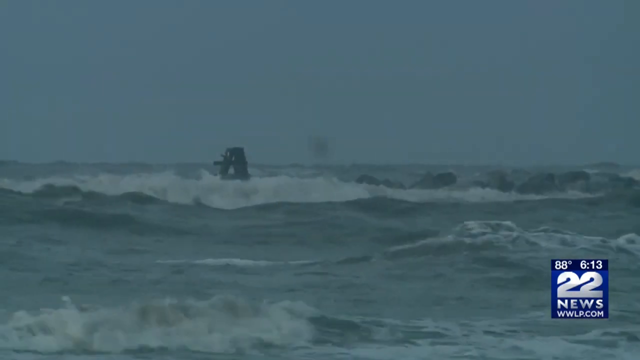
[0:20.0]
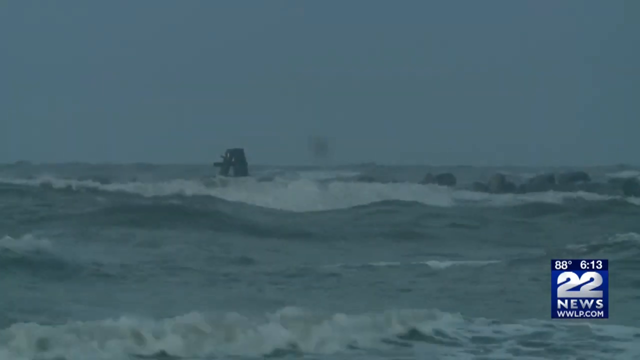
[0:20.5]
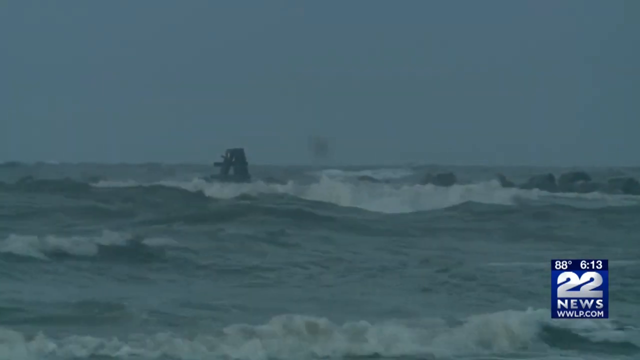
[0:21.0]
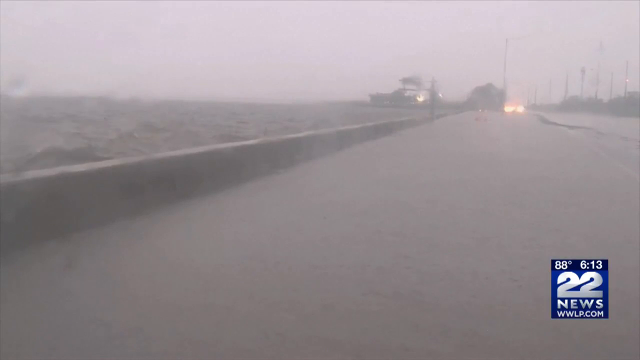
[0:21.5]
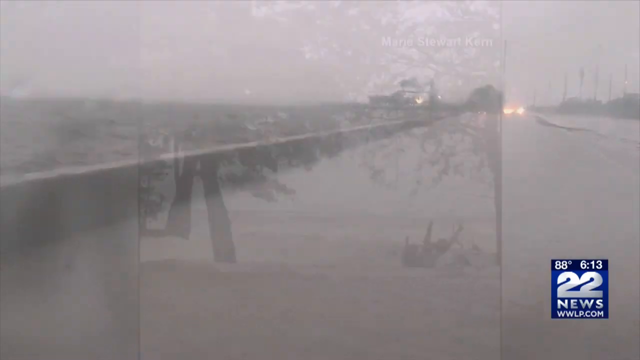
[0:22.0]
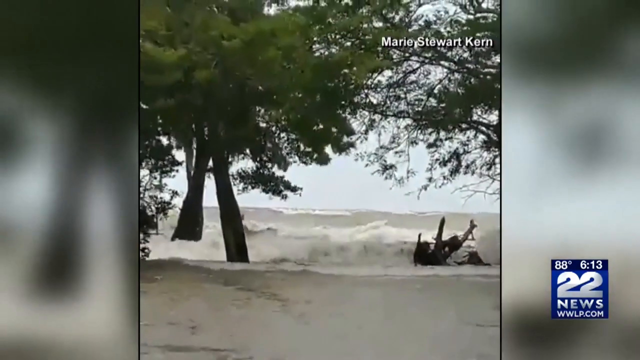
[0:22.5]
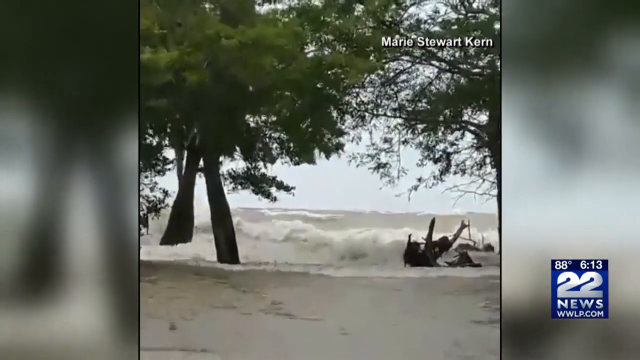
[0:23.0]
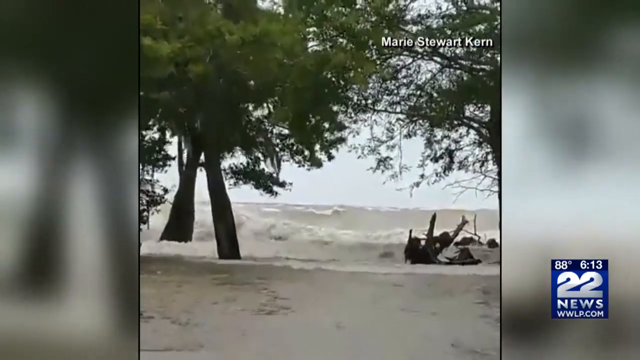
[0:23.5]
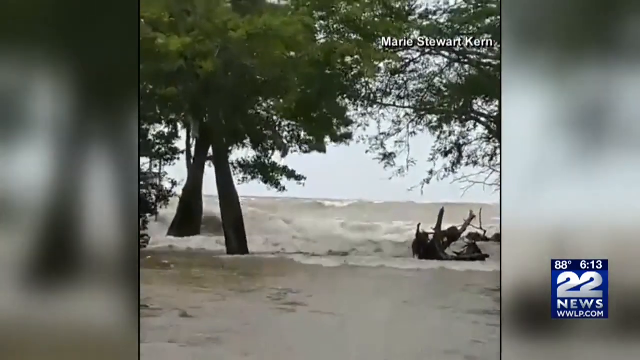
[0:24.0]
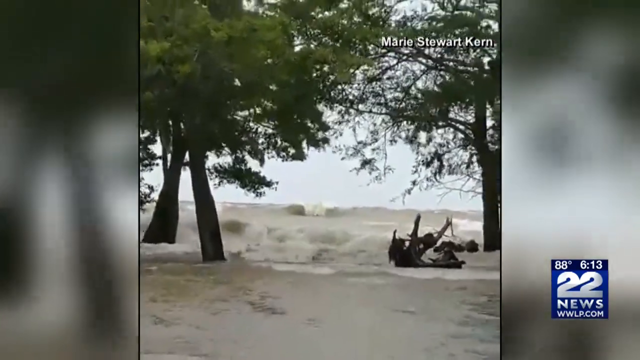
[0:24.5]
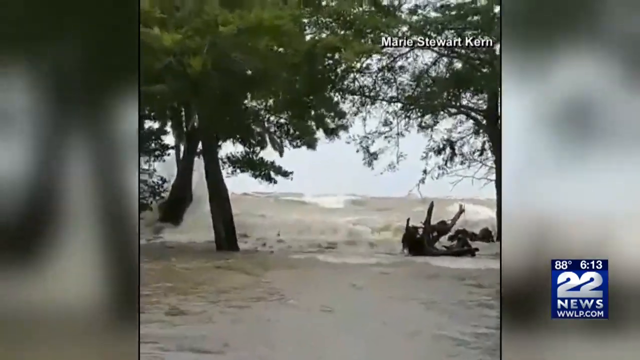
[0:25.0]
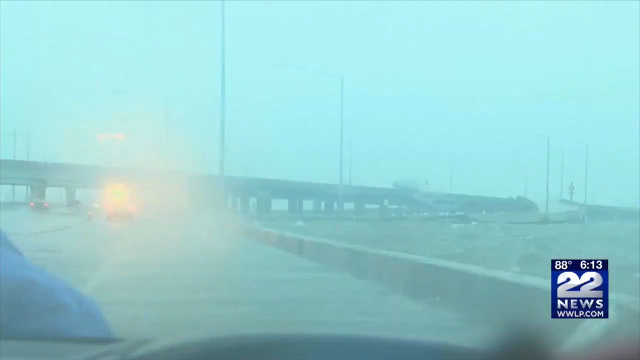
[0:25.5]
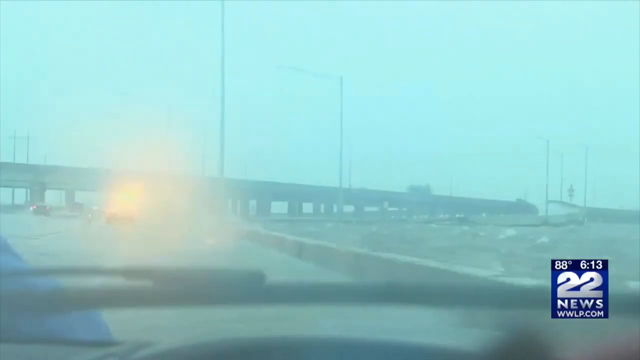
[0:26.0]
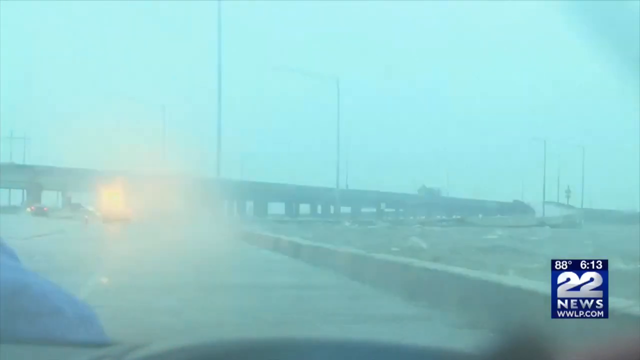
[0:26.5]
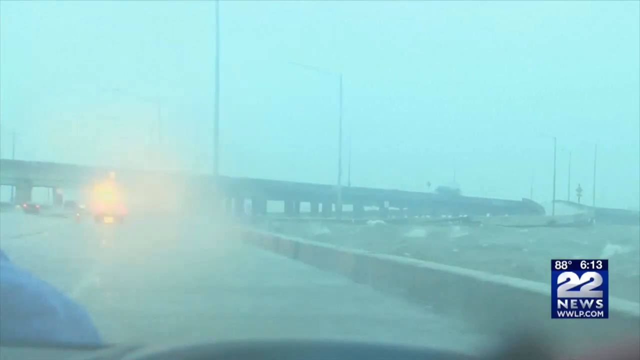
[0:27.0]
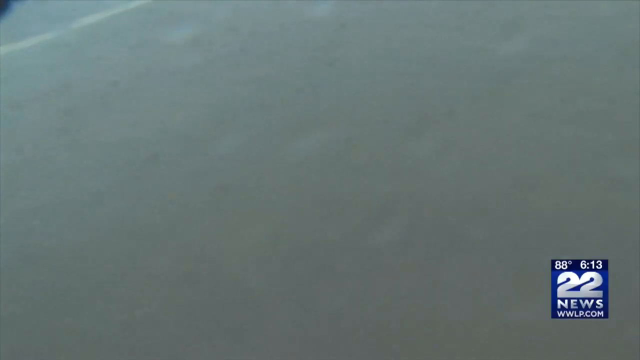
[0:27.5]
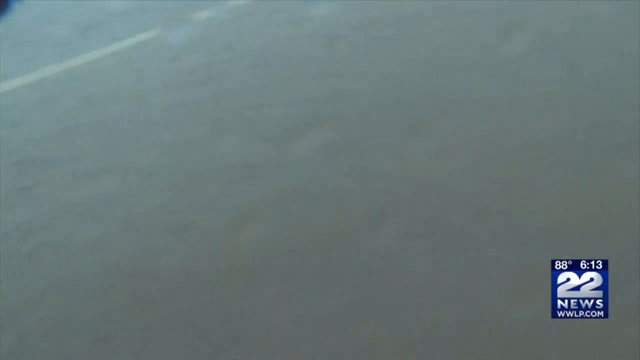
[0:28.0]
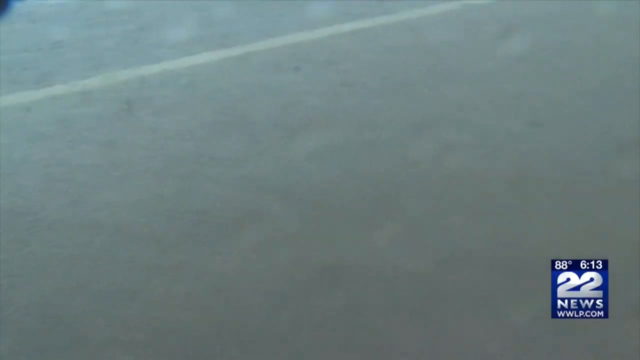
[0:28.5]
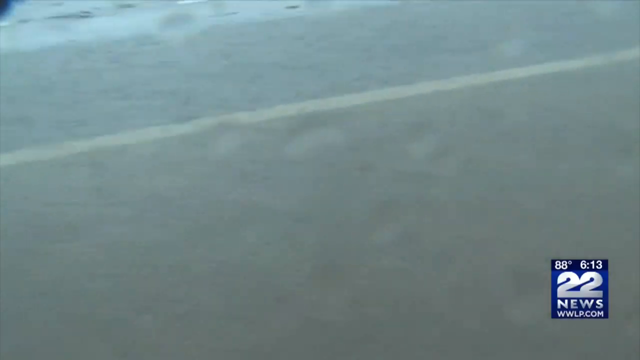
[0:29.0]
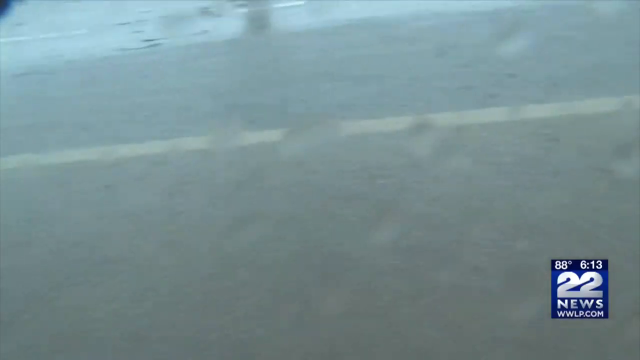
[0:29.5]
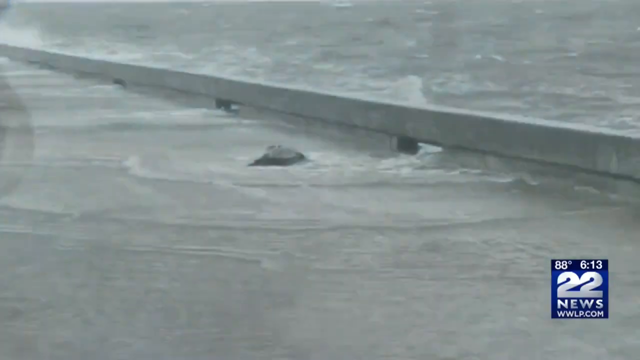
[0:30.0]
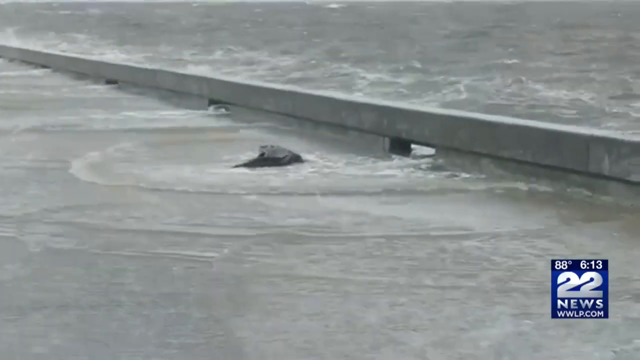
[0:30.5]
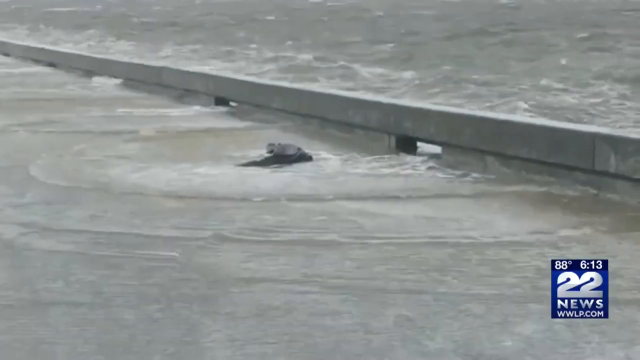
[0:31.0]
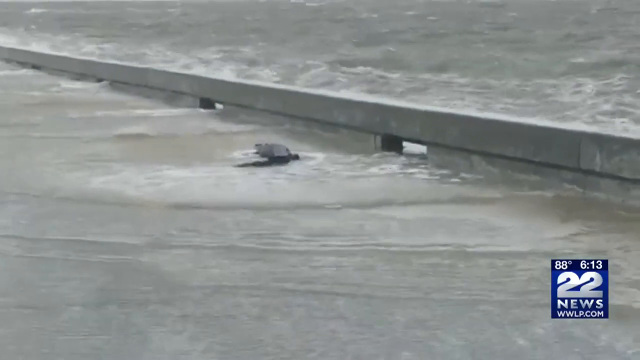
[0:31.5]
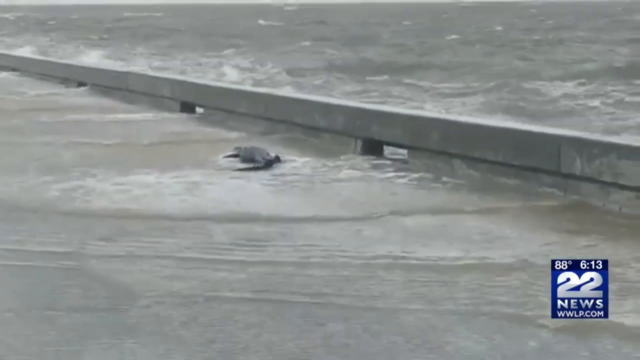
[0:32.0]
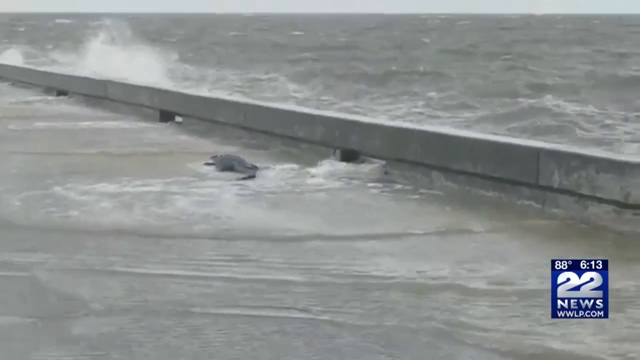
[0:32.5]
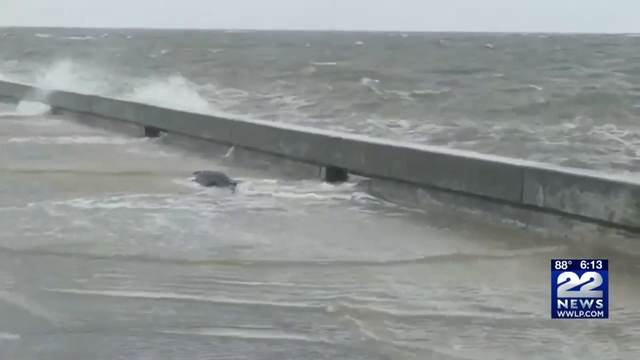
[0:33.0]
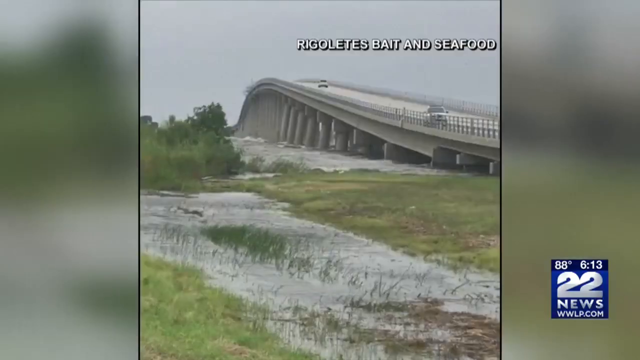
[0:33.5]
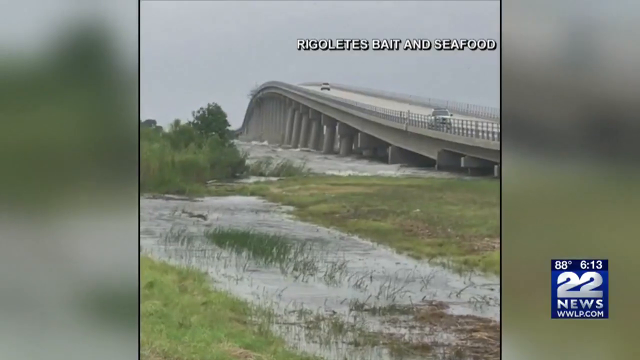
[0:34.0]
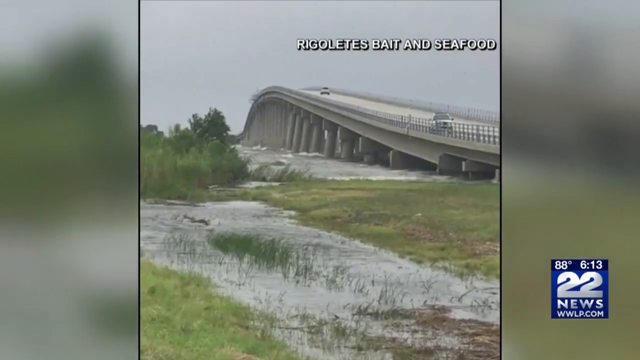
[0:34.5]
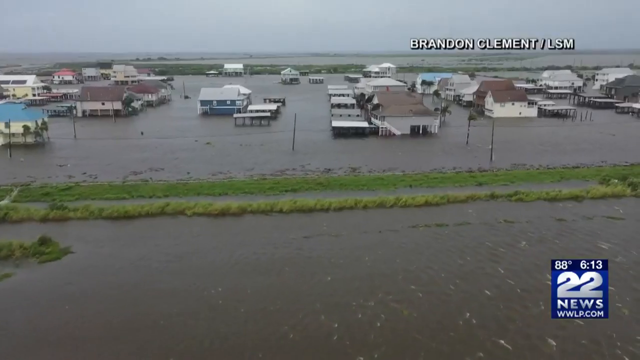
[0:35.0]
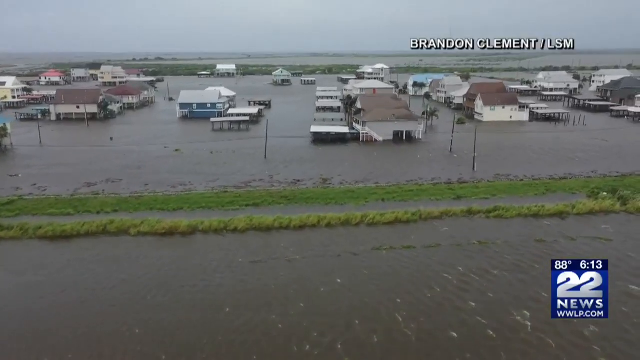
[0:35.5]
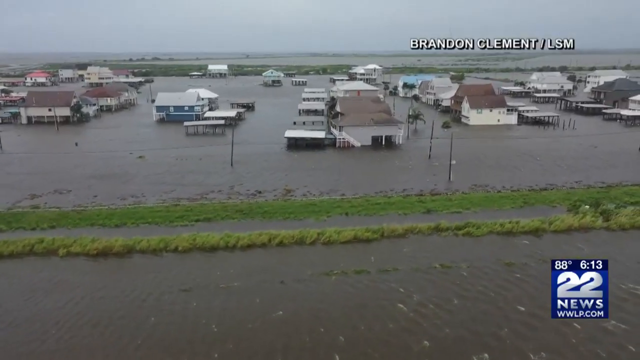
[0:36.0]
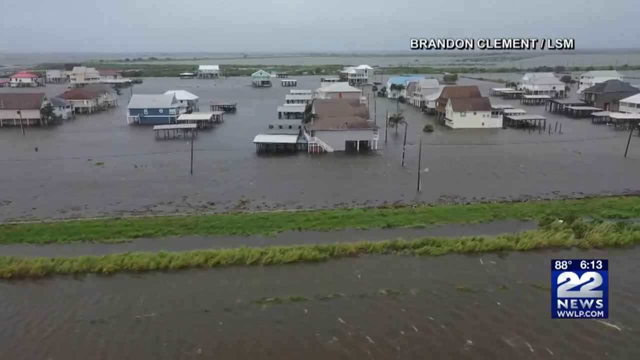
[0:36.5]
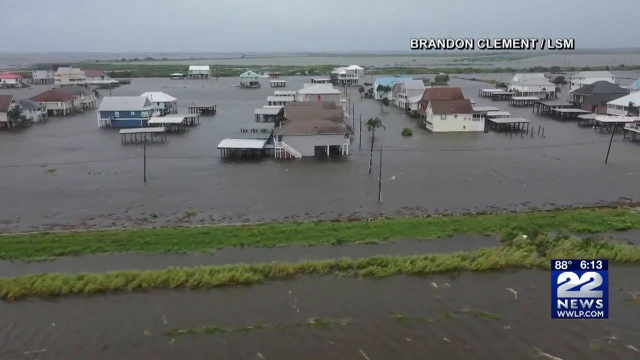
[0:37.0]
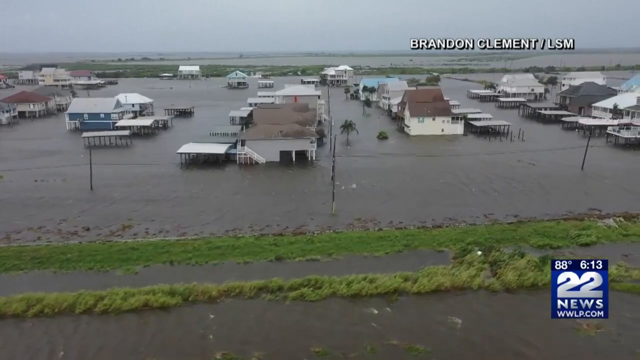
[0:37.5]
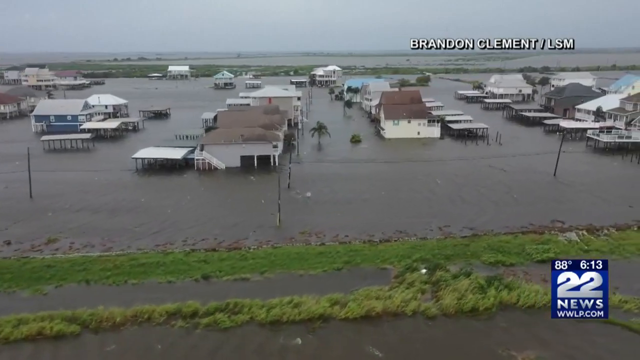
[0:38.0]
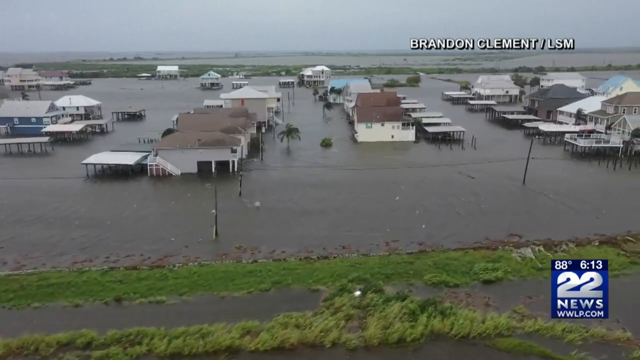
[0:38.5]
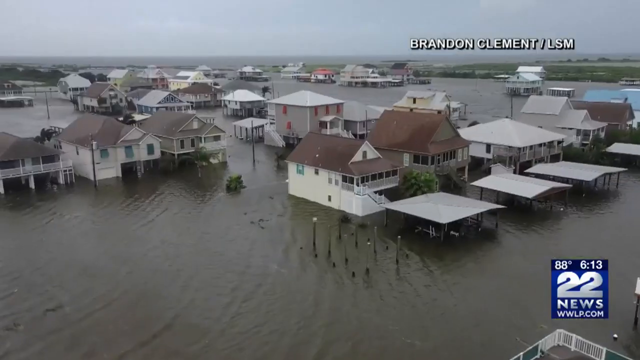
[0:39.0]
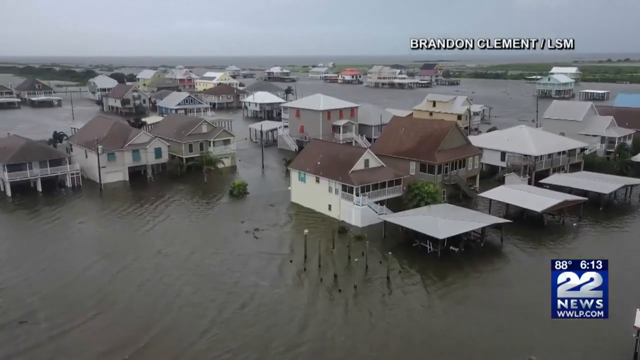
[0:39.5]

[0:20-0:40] Strong flood currents are shown. A bridge is already flooded and submerged. Ships are carried by the waves of the current, and trees and houses are submerged in water. People run for their lives, and a car is submerged. Trees are shaken by the water because of the current, and police are trying to do something. Everywhere is flooded.